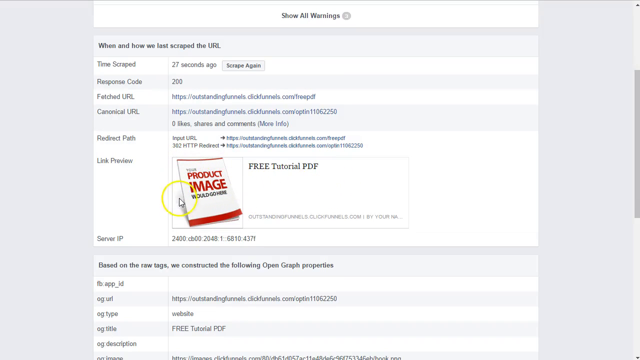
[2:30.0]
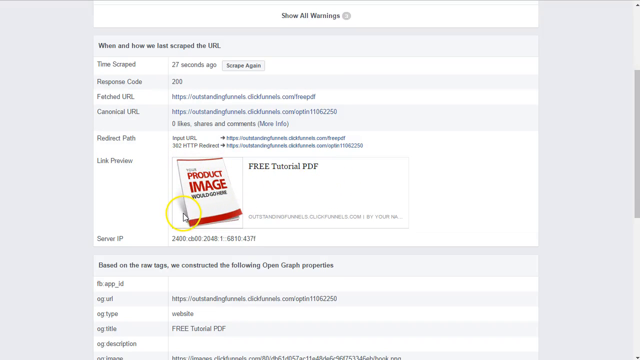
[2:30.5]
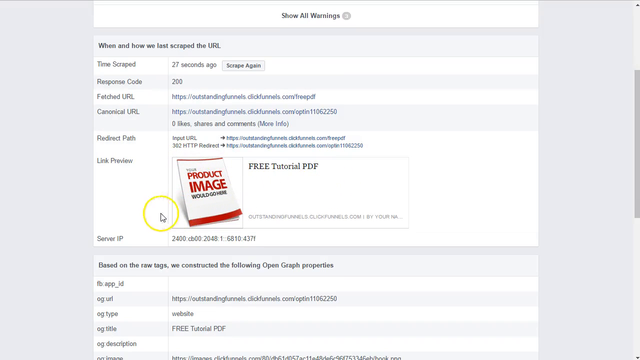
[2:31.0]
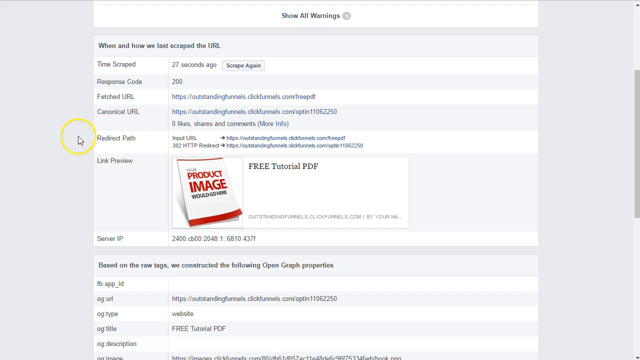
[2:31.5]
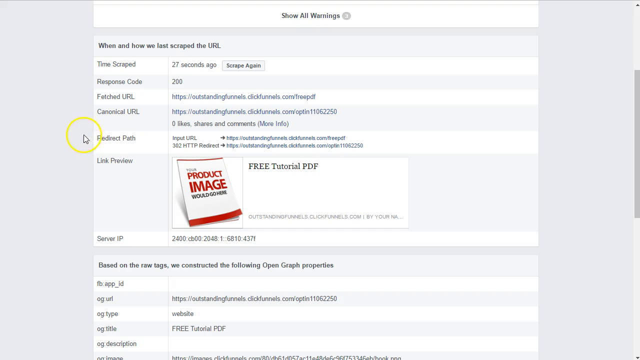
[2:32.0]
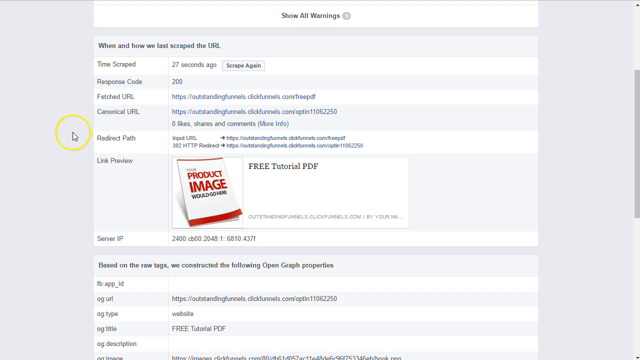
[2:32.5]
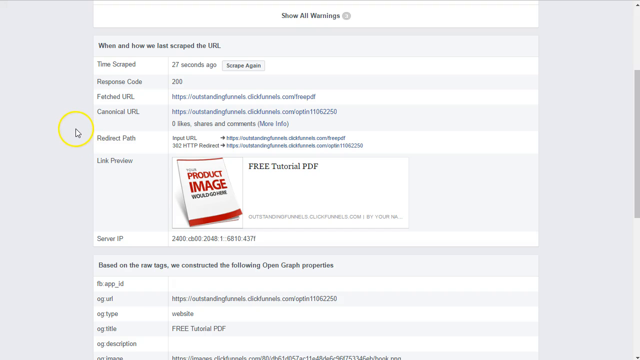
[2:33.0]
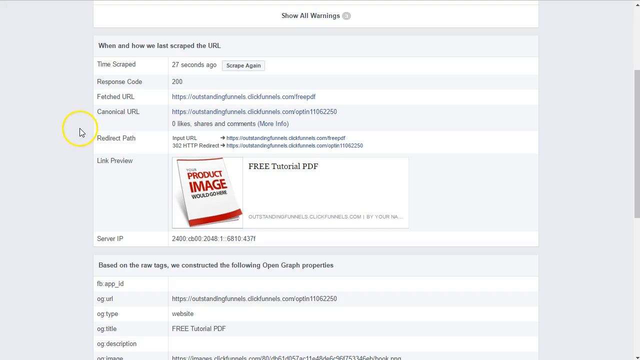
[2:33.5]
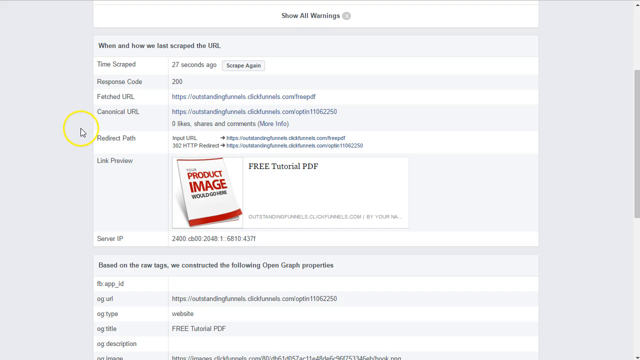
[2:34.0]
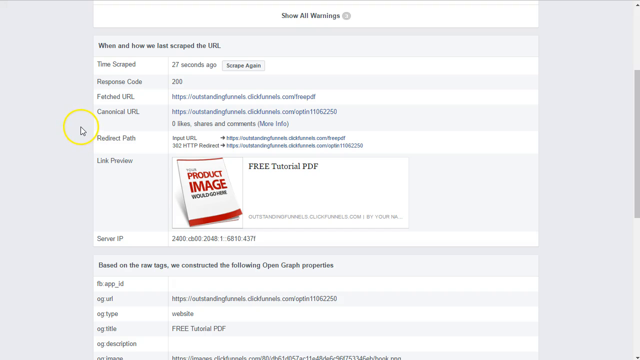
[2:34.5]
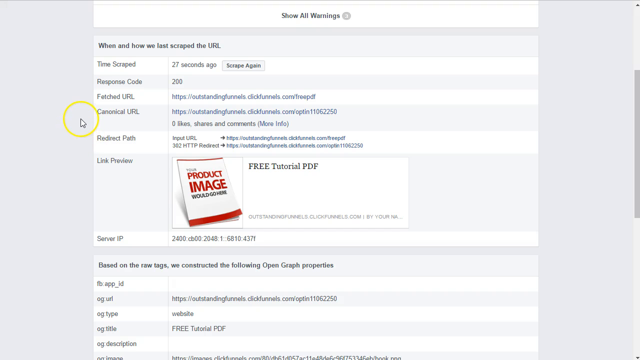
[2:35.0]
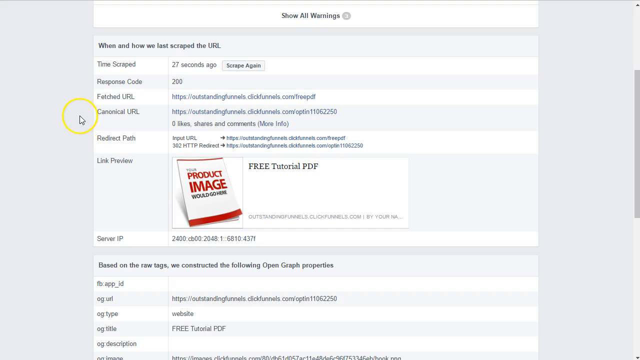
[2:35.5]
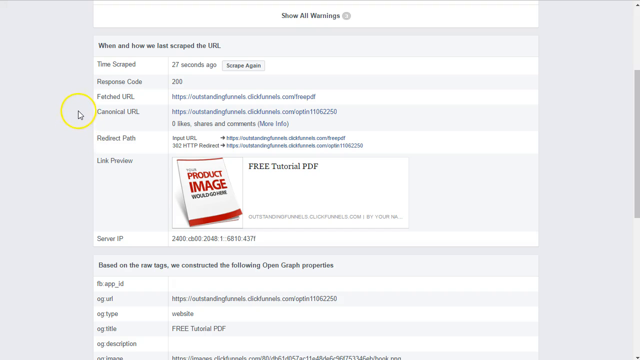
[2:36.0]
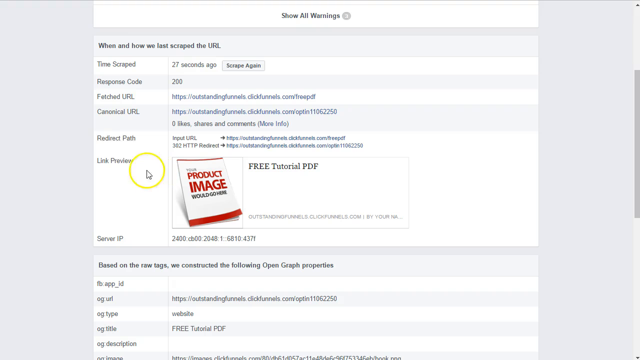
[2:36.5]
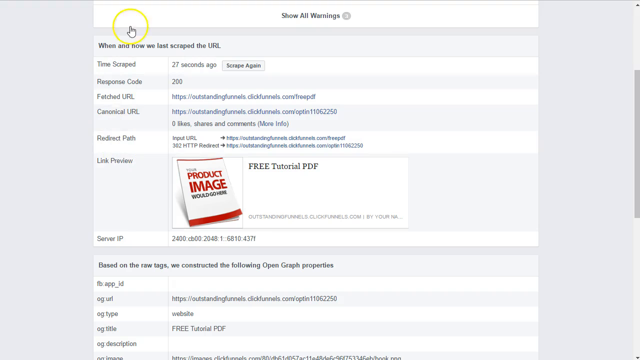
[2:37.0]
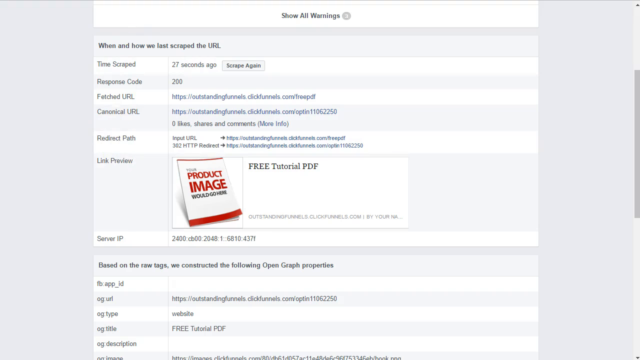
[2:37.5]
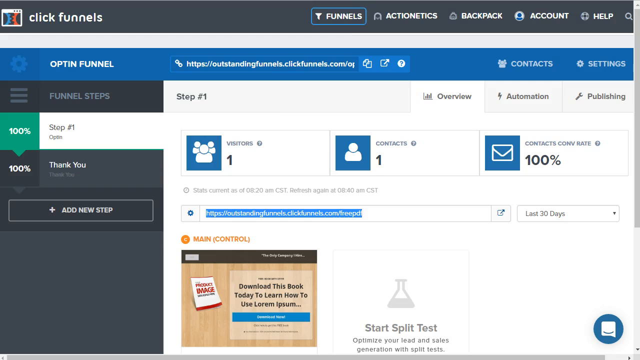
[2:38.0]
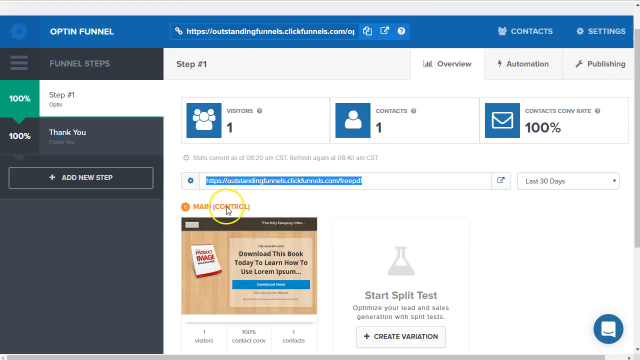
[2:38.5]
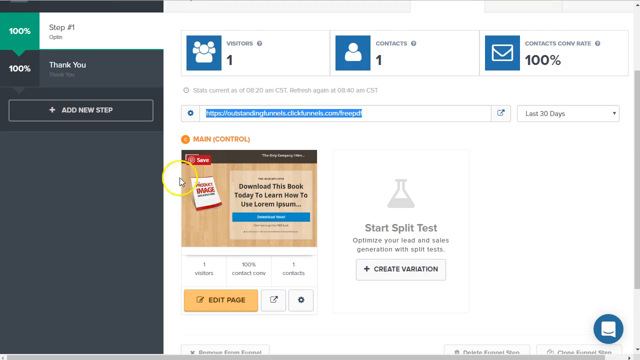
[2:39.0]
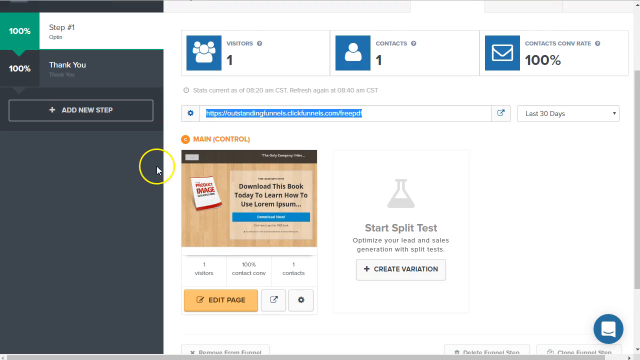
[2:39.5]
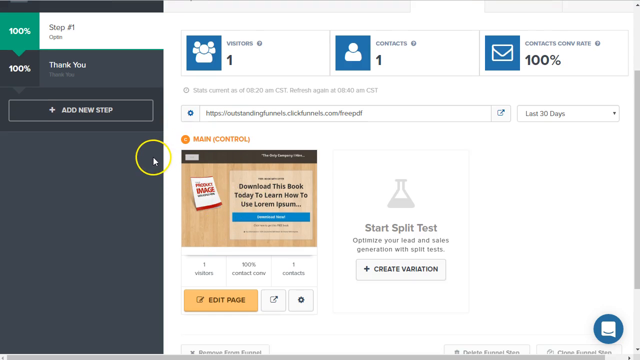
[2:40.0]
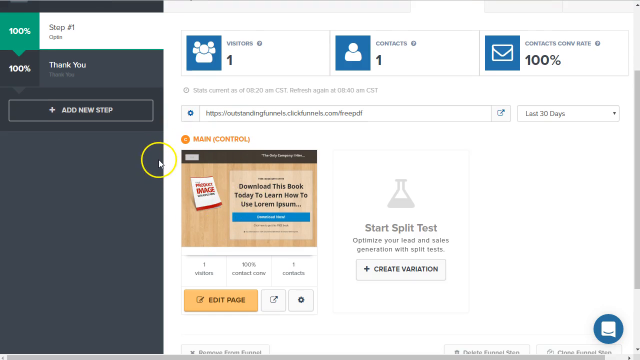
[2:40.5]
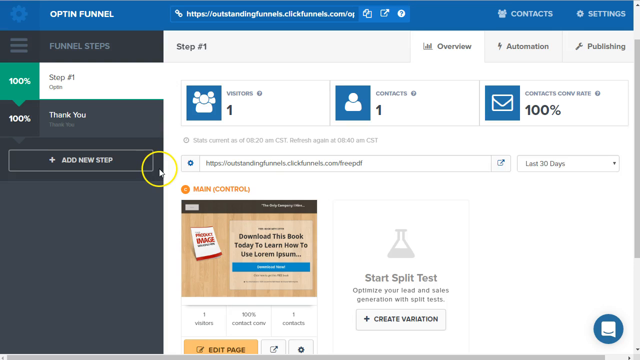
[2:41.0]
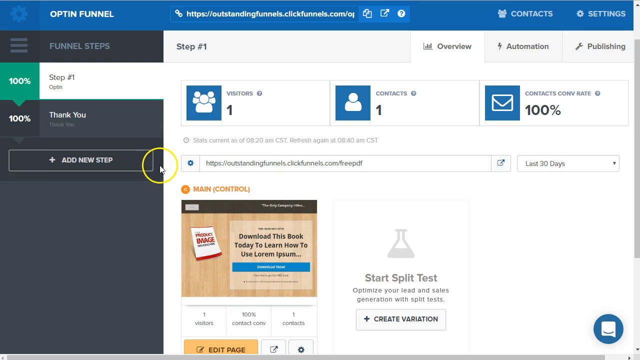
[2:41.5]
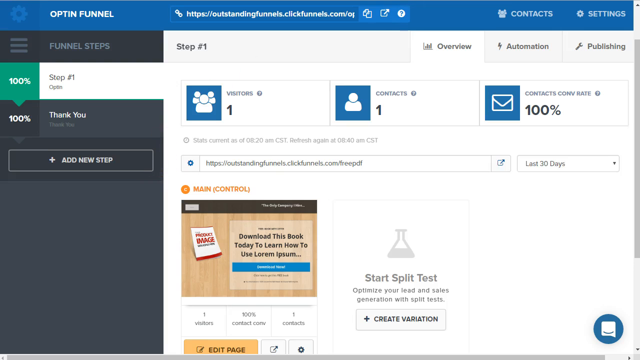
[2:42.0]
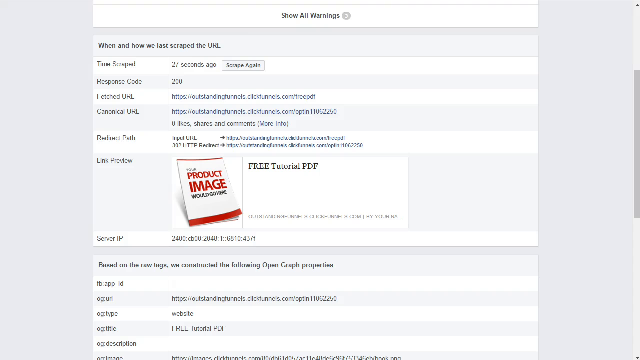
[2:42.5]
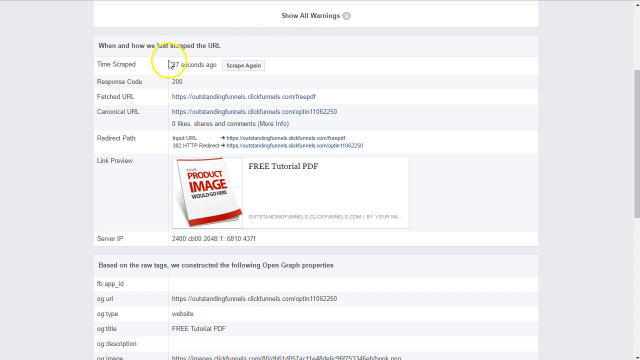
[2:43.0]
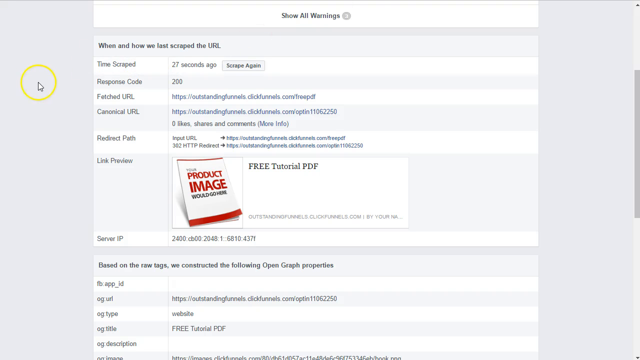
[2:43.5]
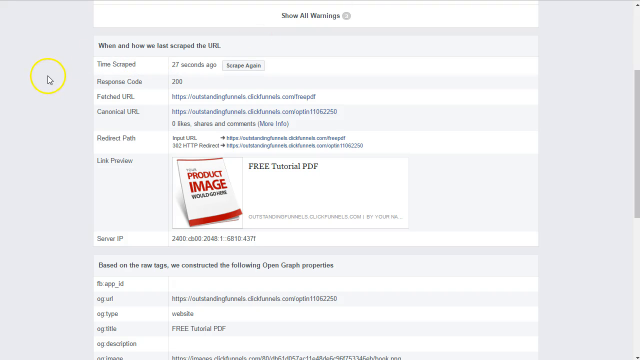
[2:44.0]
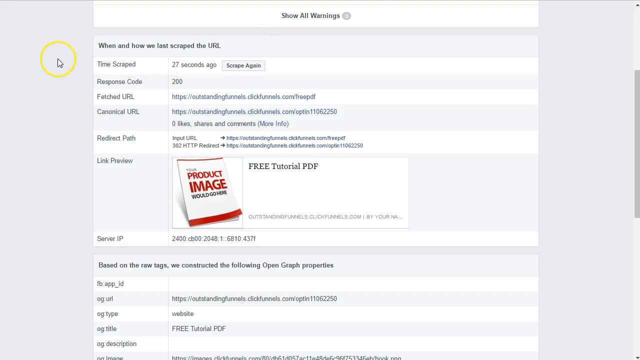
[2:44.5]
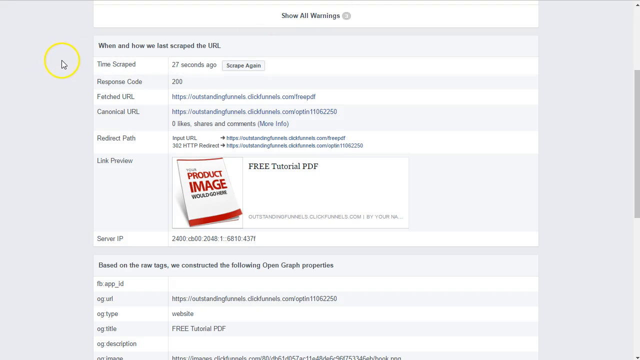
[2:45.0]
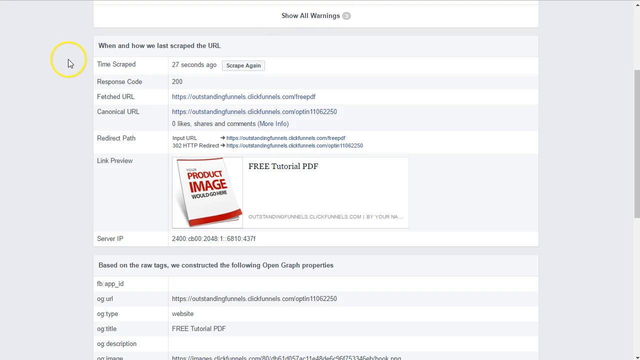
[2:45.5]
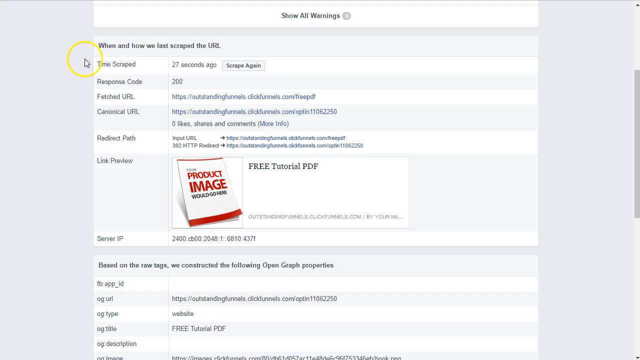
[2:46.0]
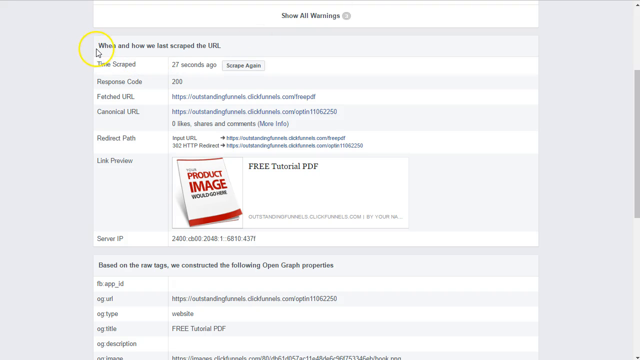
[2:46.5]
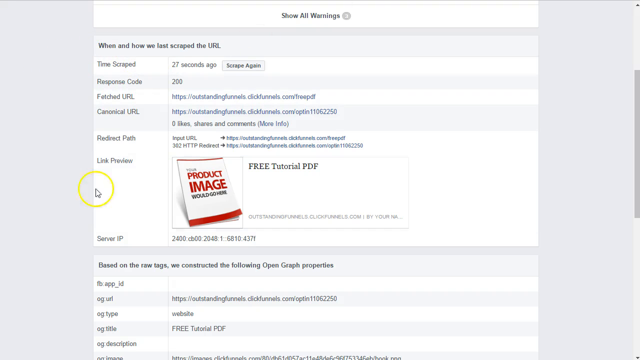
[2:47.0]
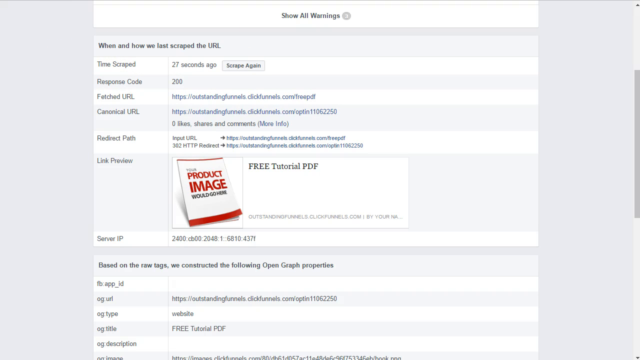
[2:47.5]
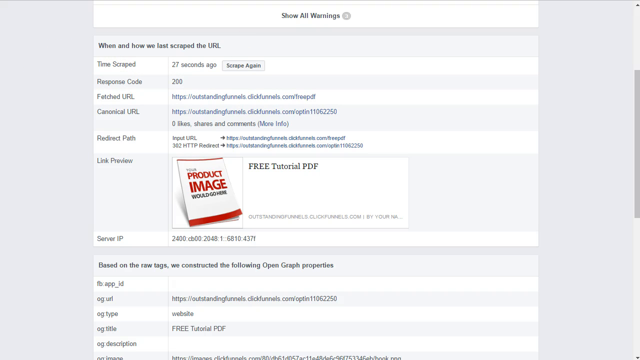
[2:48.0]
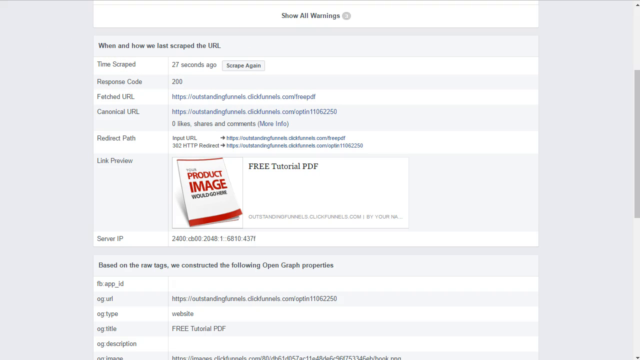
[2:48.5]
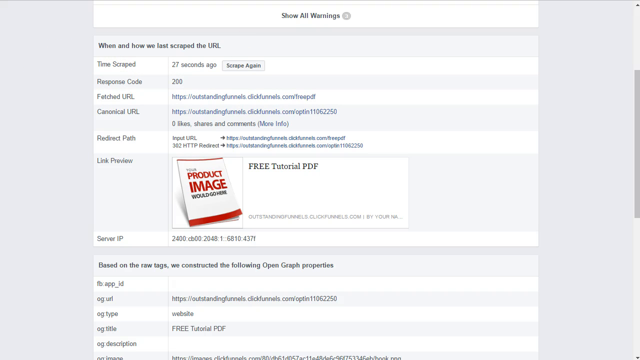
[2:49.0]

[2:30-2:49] The page shows a book where a product image can be placed, along with a free tutorial PDF offered to help promote a business. The cursor is circled in yellow. The website turns the page and then turns back to the original page with the free tutorial PDF, and the cursor hovers around that area. The picture of the book is next to a section that says "download this today to learn how to use a lorem ipsum." A black pop-up appears in the middle, showing something like a turning, and another pop-up appears on the right. The yellow-circled cursor keeps moving over the selections and clicks on an orange box, the last selection. It moves around the book, goes up to the upper left-hand corner, then hovers back to the right side of the book, where it highlights the free tutorial PDF, most likely to download the free copy.